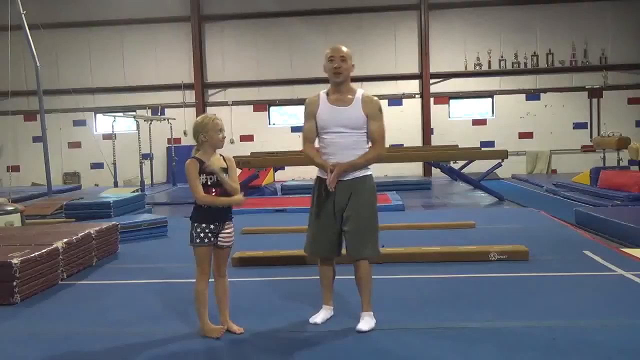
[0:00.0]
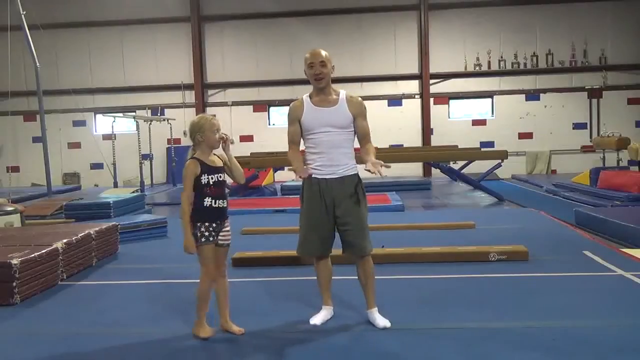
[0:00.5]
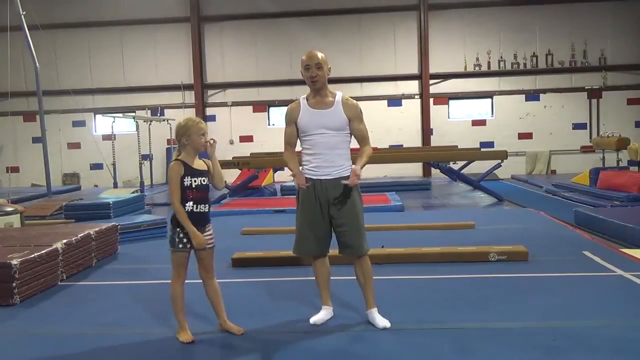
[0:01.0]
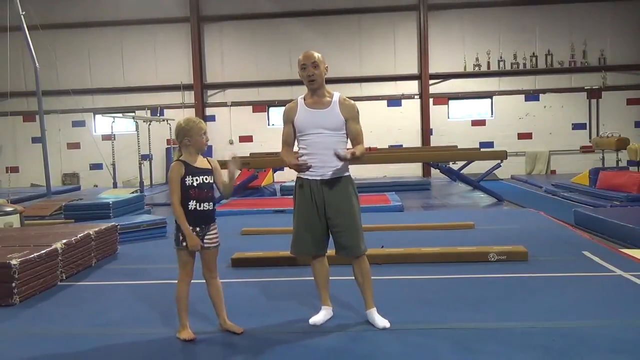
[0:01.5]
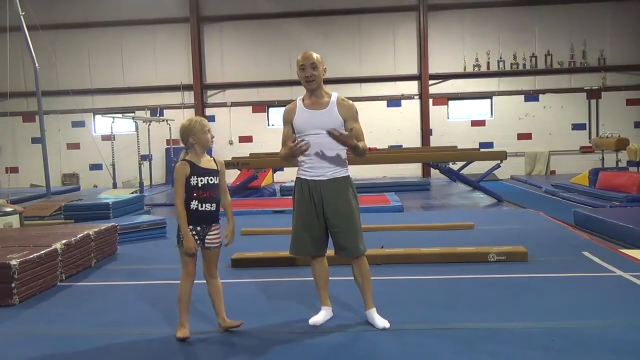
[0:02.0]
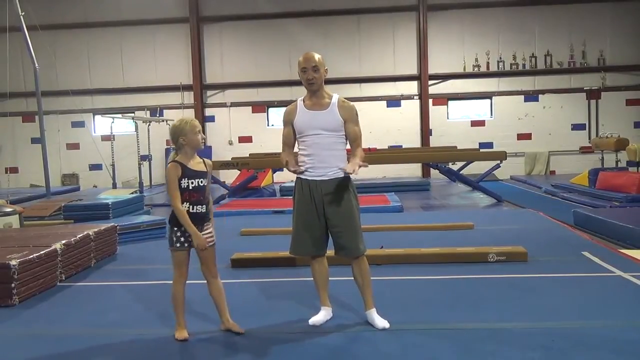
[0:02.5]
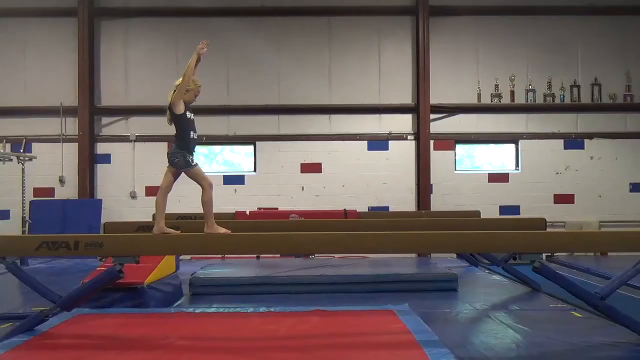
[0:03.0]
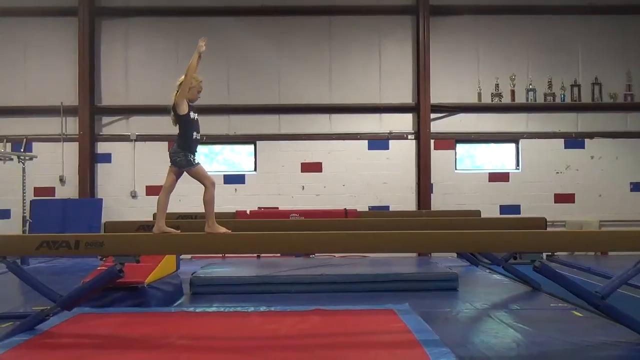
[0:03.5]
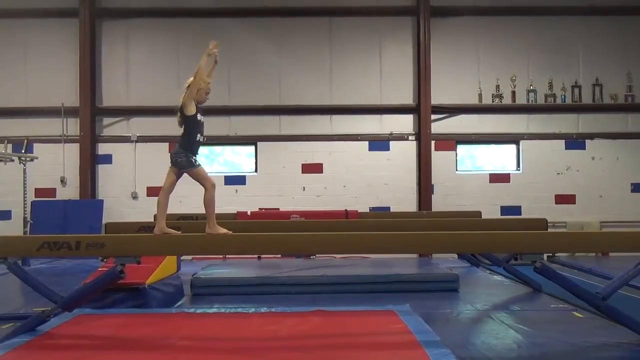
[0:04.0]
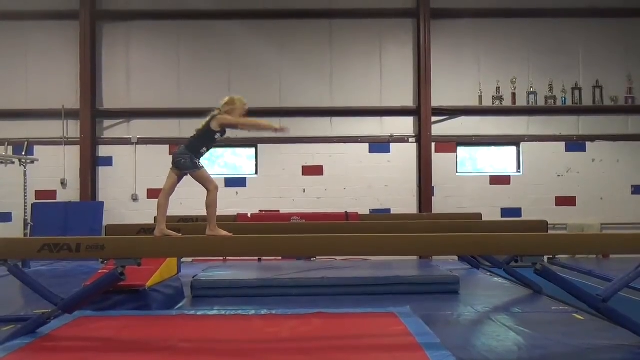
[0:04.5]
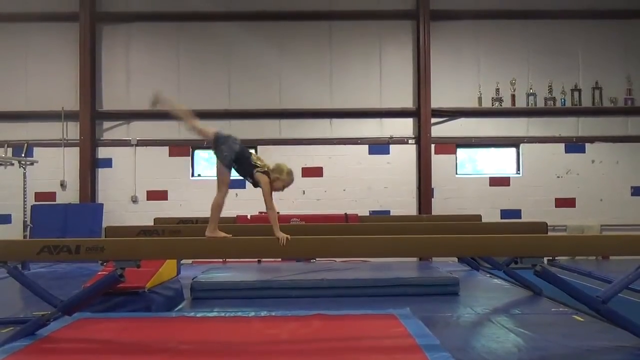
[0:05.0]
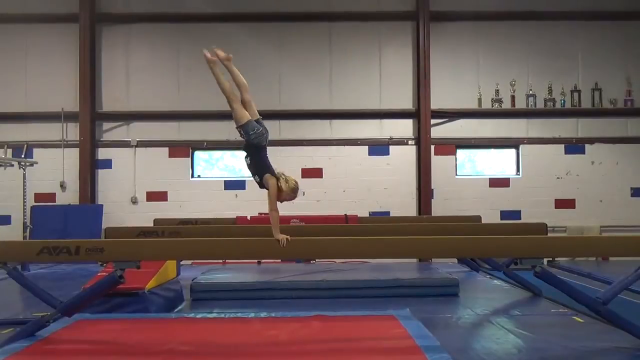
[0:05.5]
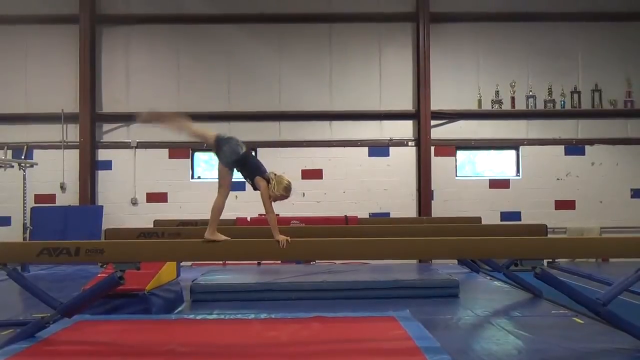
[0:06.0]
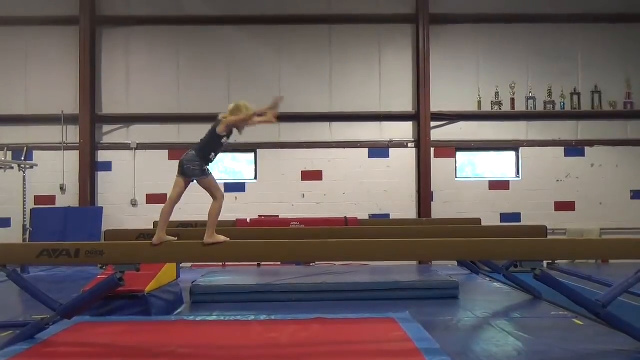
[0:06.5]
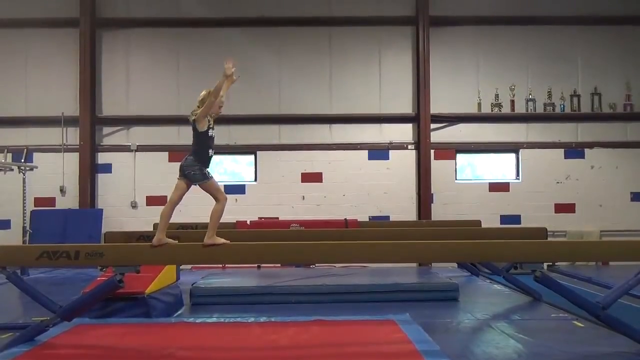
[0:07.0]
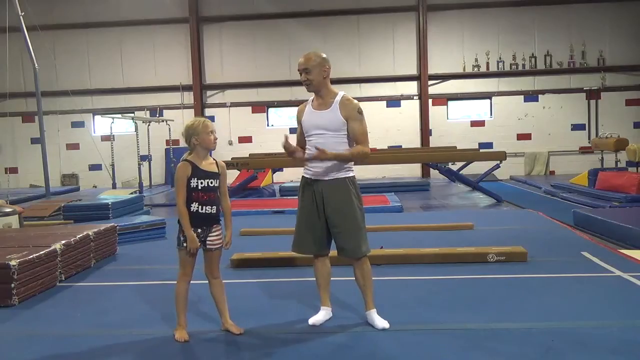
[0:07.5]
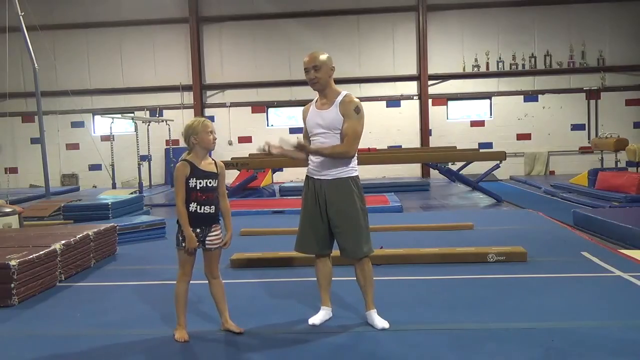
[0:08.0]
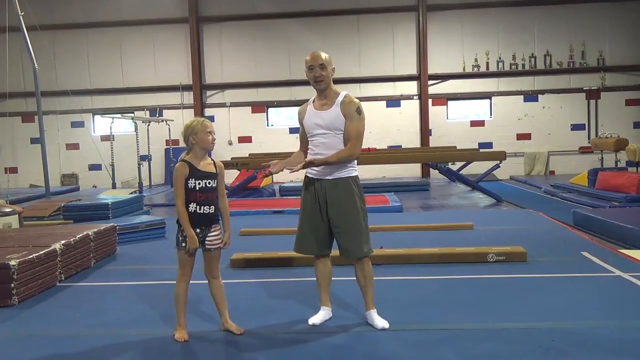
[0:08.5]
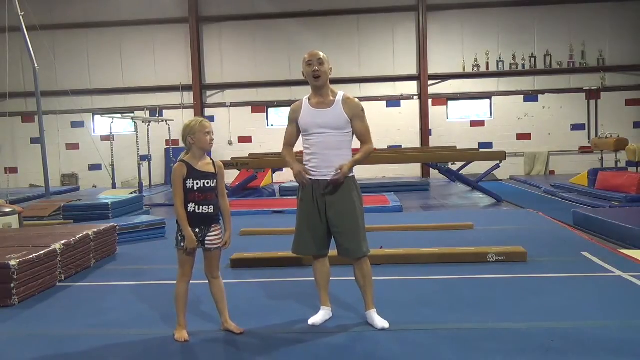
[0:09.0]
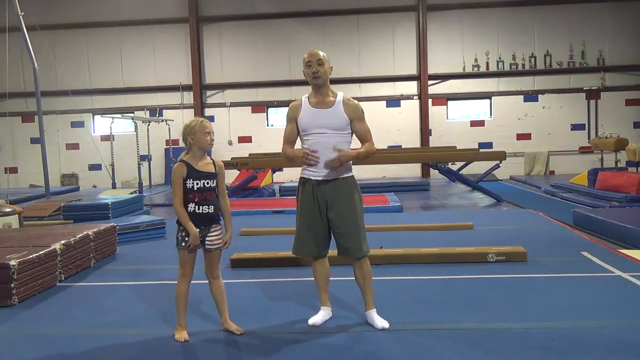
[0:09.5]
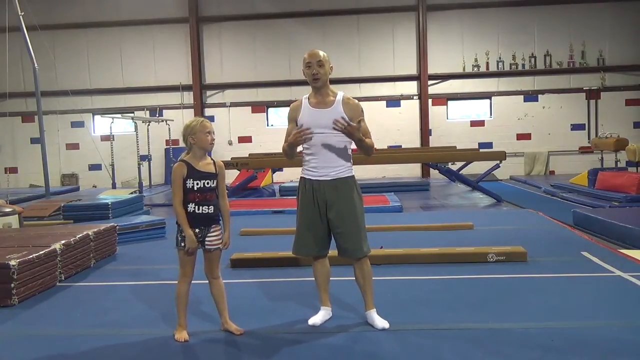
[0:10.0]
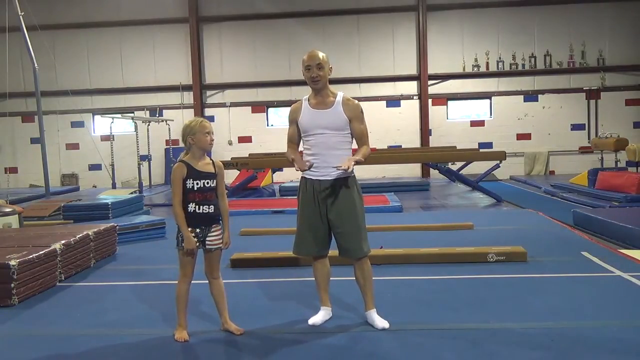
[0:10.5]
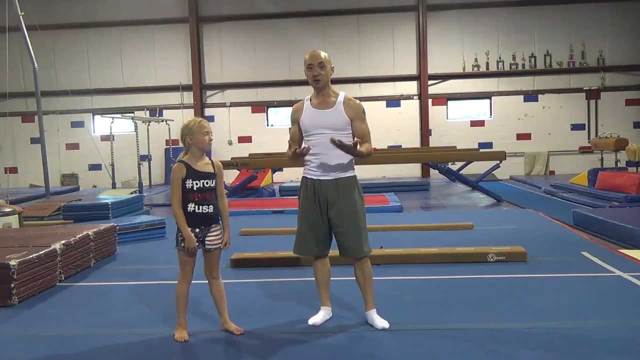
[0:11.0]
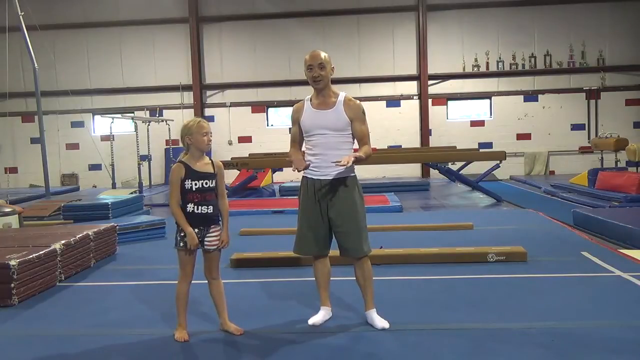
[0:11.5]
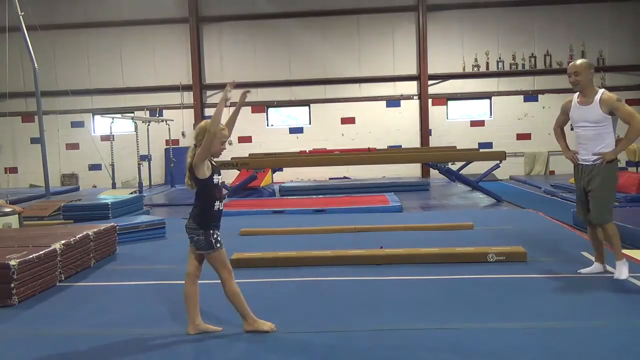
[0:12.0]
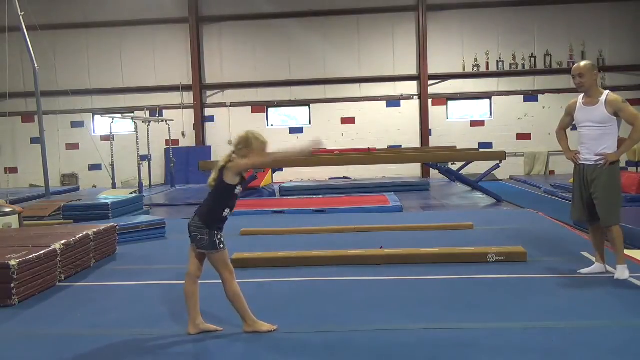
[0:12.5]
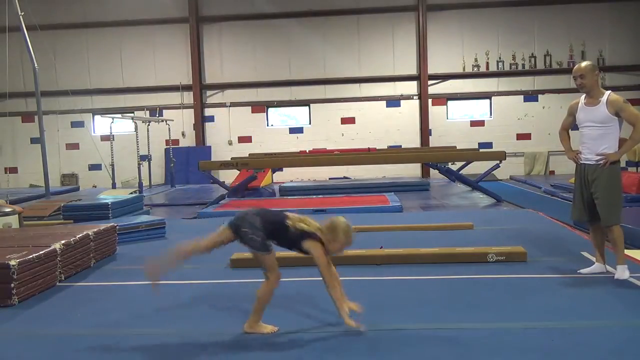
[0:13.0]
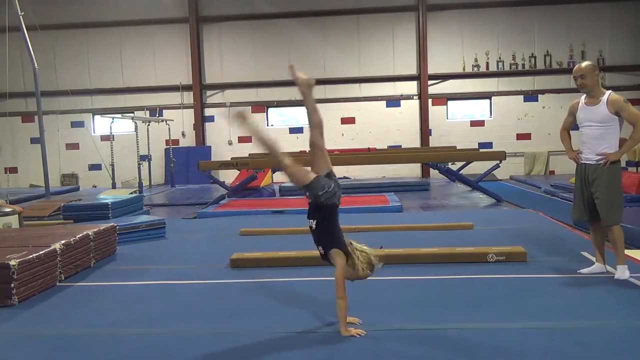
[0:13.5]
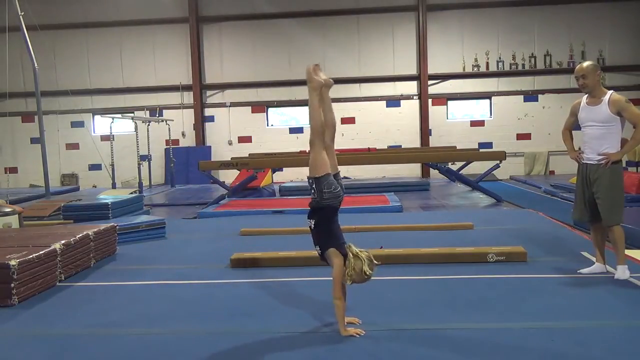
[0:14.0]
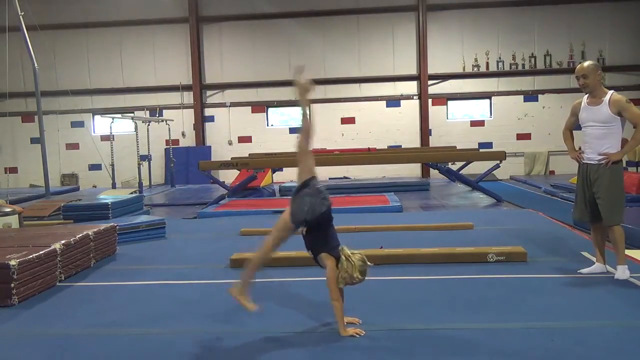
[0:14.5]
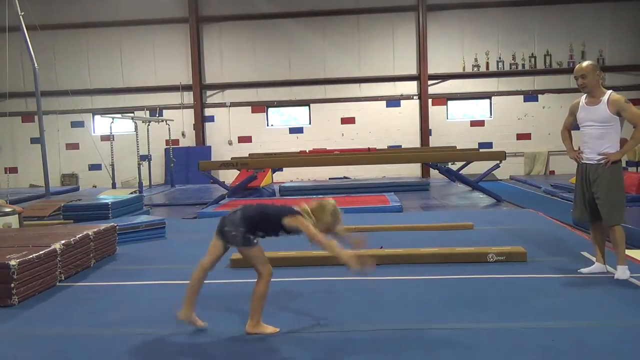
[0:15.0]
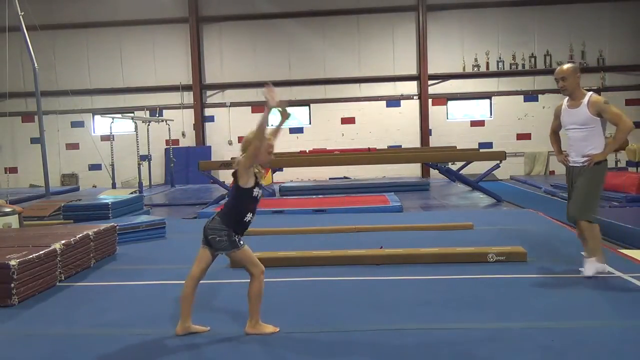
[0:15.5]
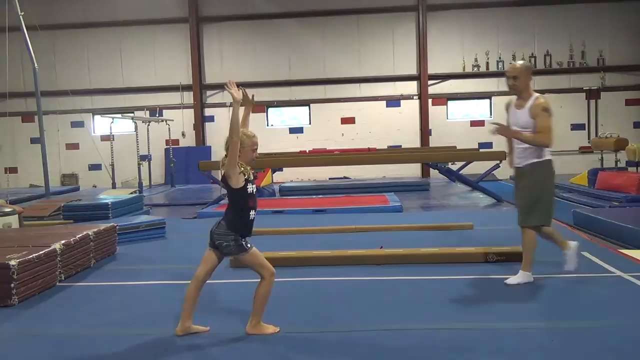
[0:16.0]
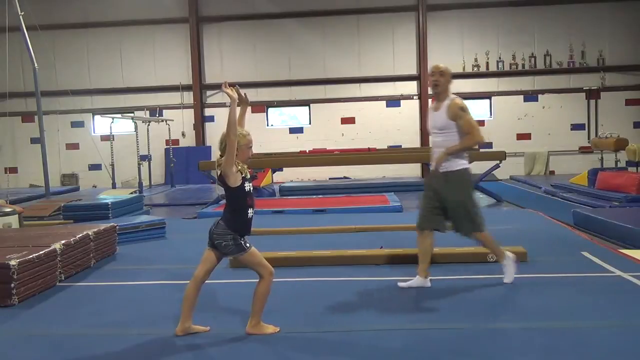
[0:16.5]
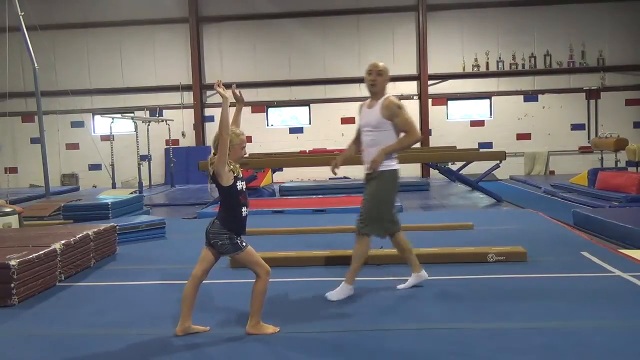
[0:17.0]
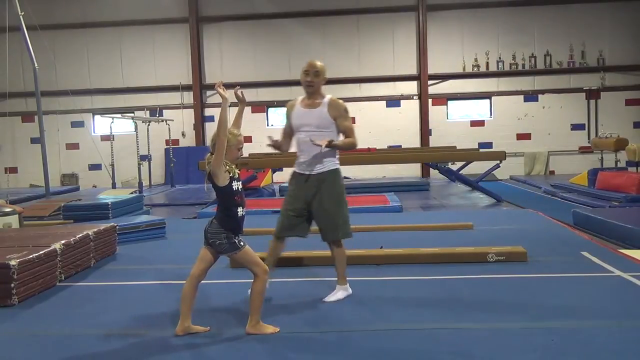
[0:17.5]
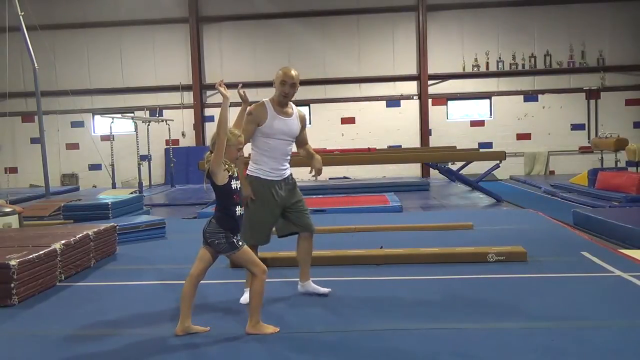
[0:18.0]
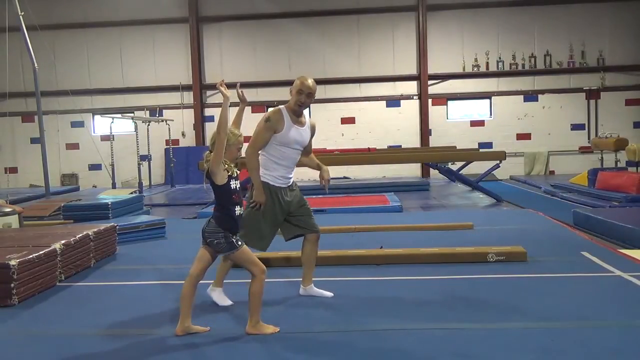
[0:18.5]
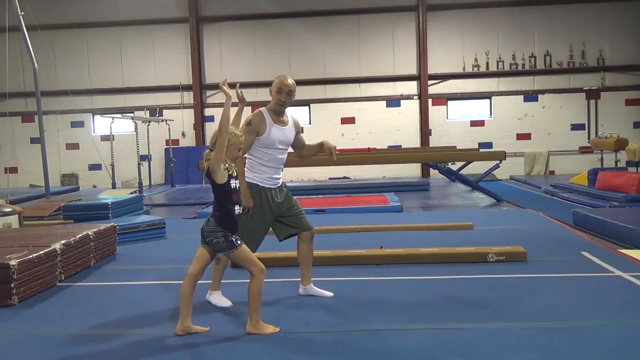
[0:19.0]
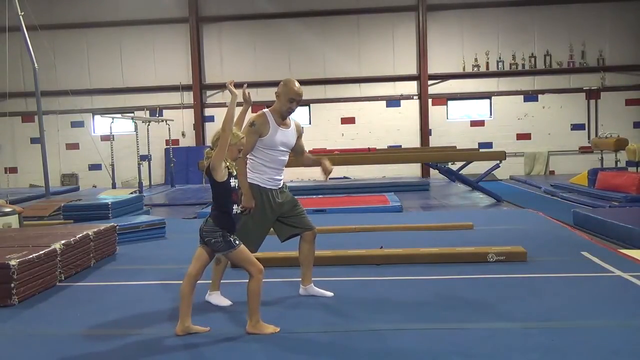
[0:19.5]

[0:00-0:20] A little girl does gymnastics flips on a beam while an Asian man watches her. She is trying to practice and work very hard at her gymnastics, and she is wearing an American flag. Gymnastic mats are on the wall in the background. The white wall behind them has a variety of patterns, and three windows in the background let light into the scene.